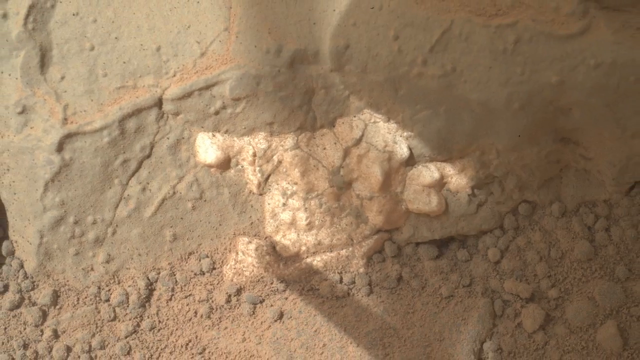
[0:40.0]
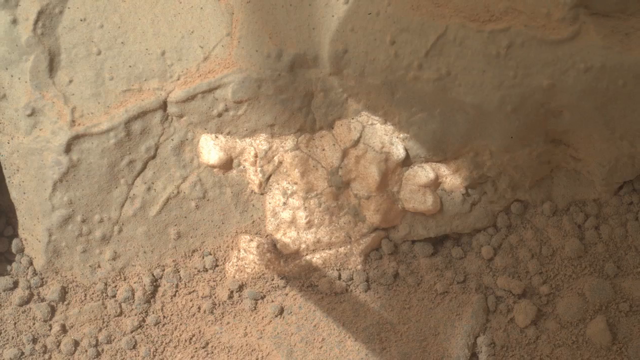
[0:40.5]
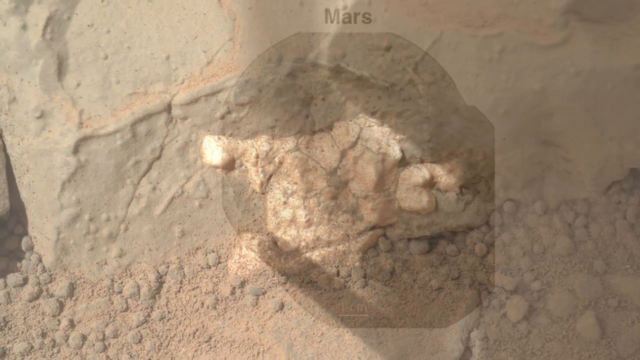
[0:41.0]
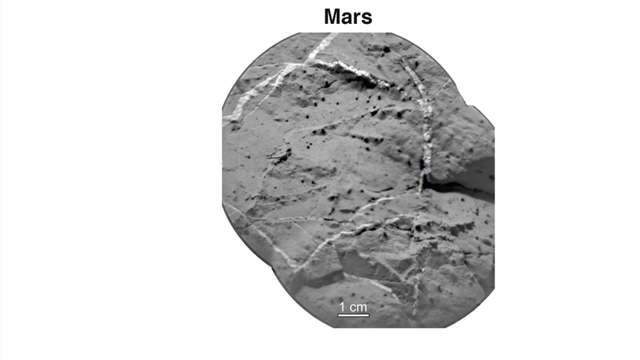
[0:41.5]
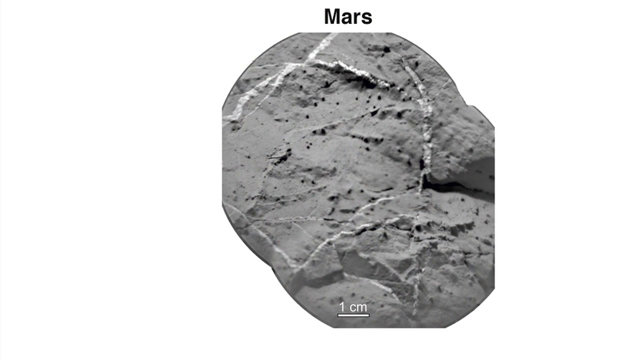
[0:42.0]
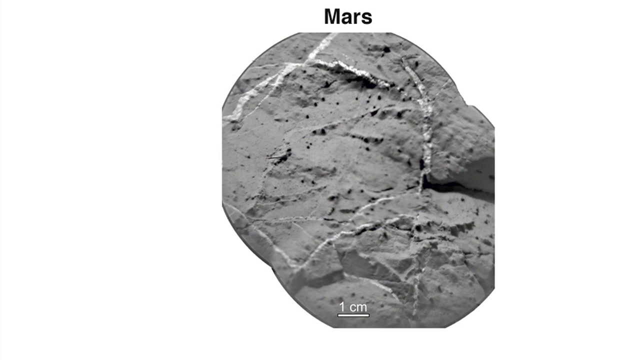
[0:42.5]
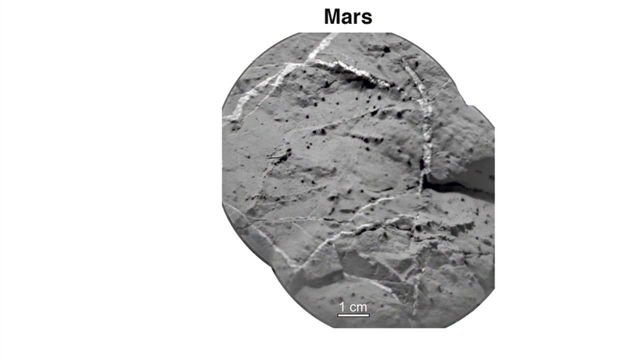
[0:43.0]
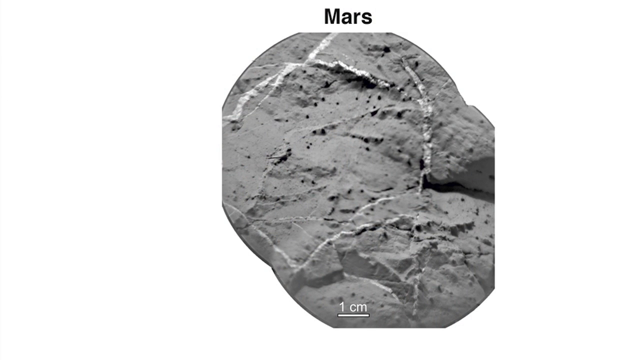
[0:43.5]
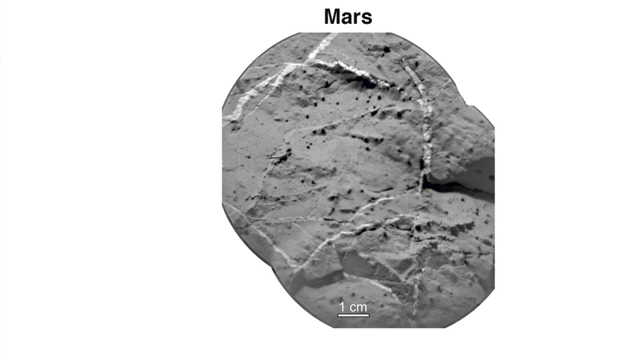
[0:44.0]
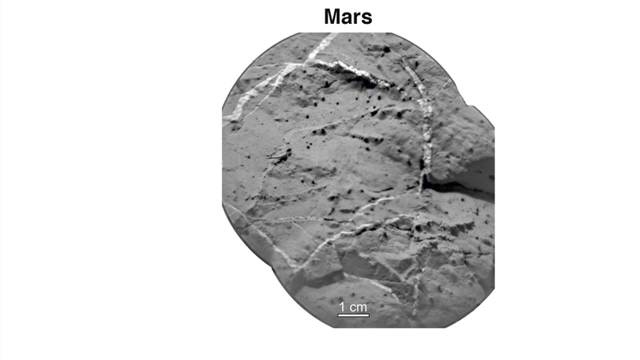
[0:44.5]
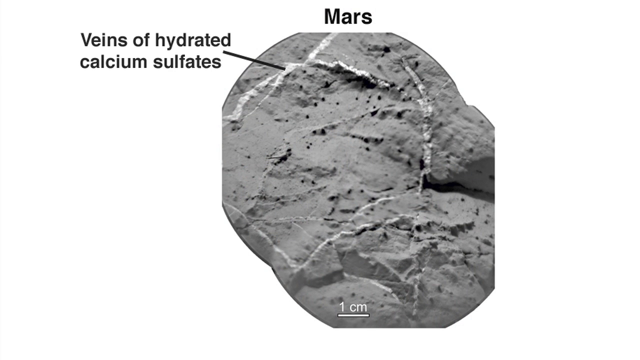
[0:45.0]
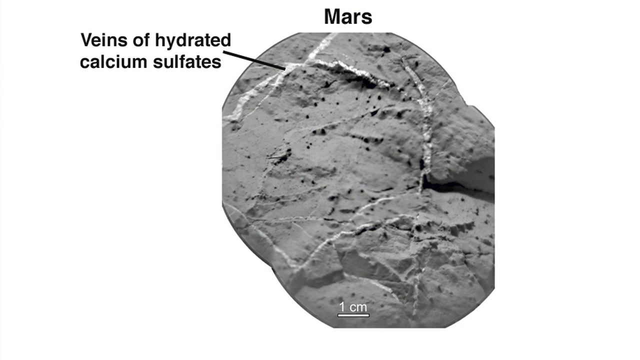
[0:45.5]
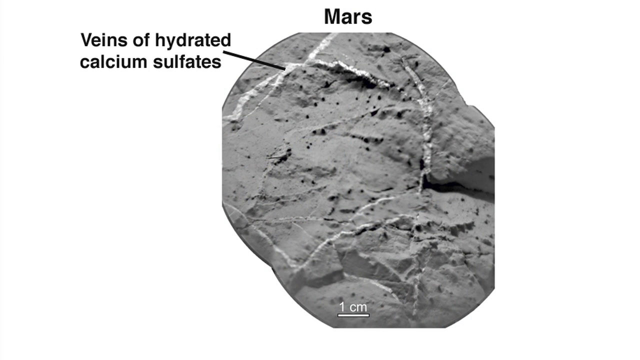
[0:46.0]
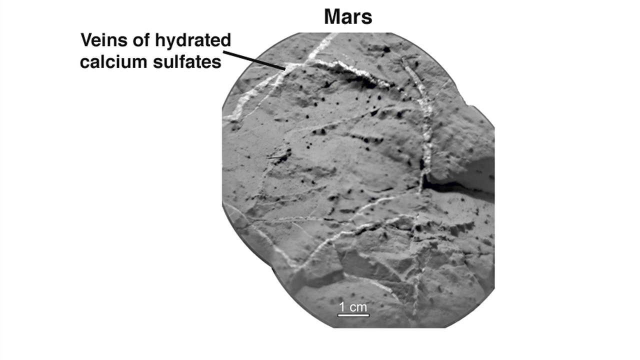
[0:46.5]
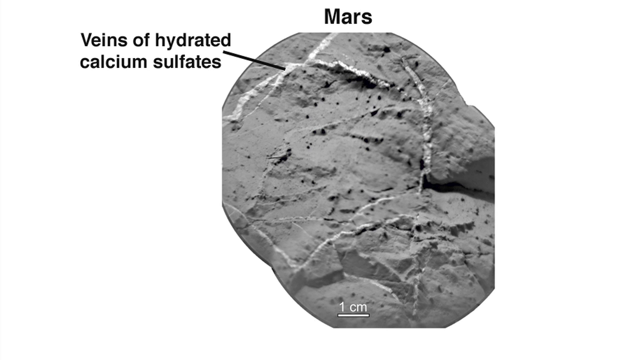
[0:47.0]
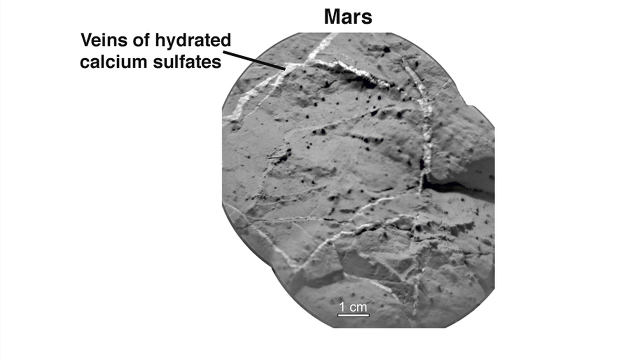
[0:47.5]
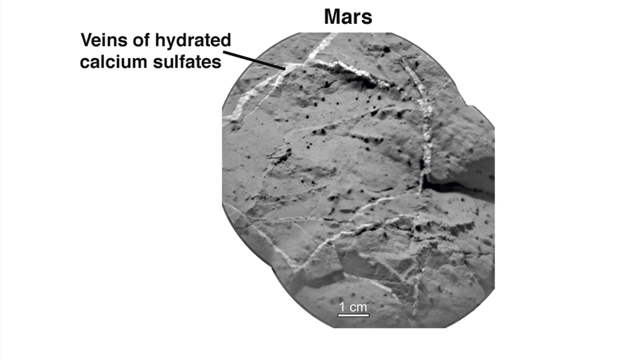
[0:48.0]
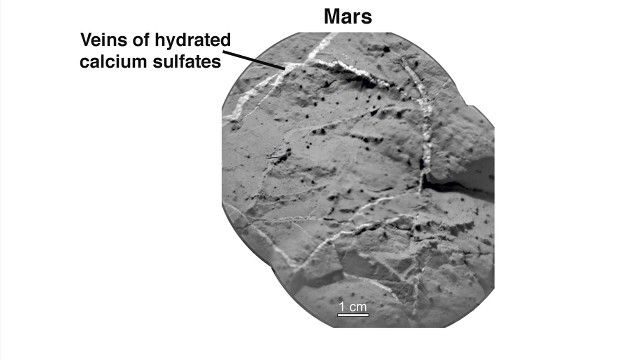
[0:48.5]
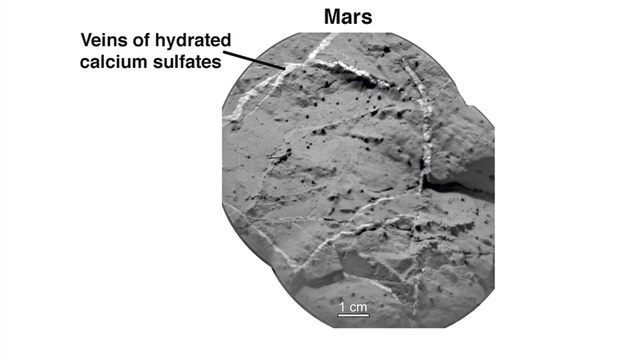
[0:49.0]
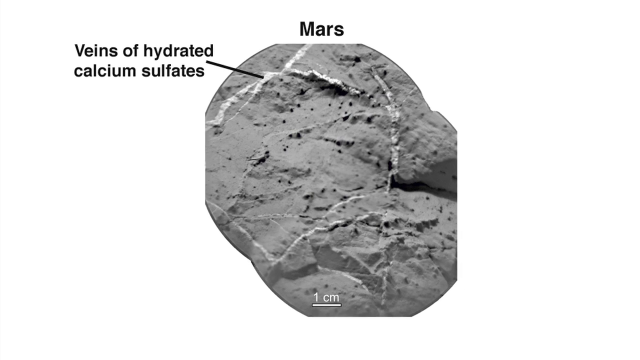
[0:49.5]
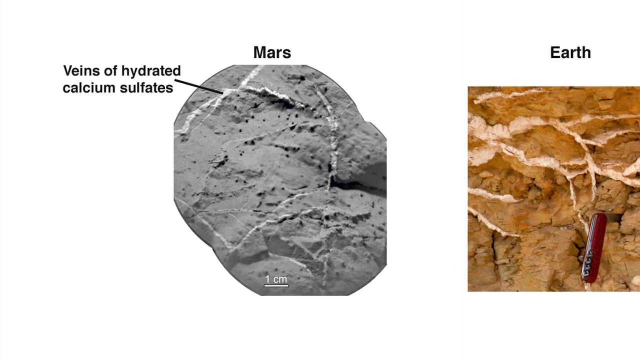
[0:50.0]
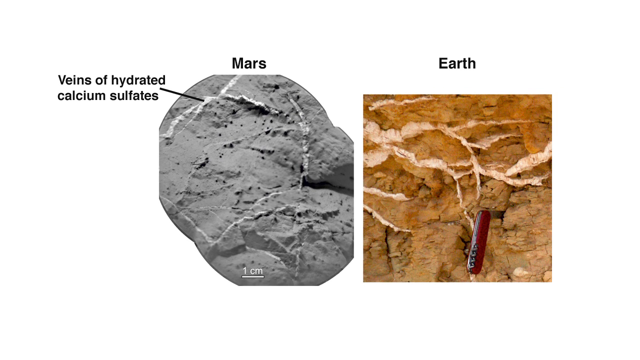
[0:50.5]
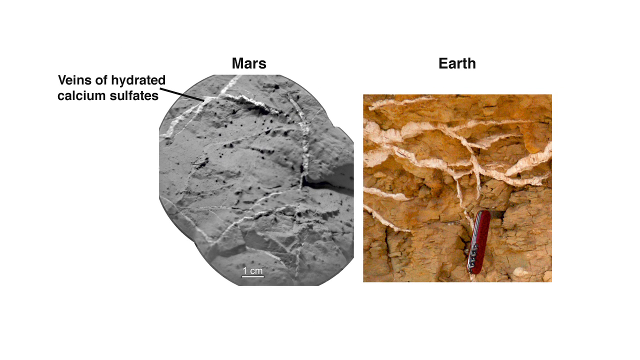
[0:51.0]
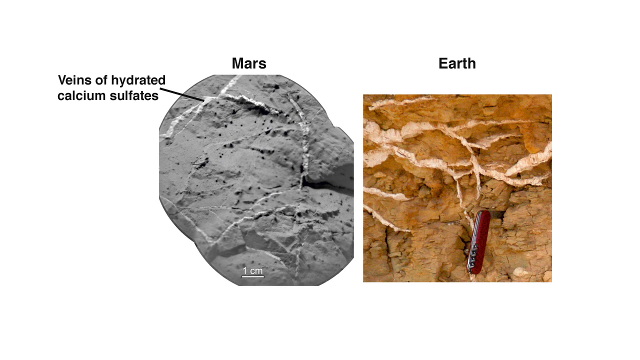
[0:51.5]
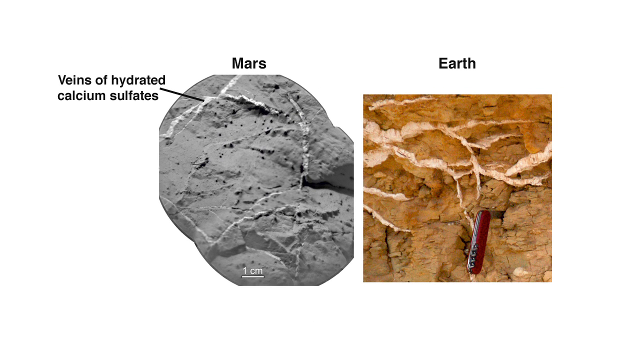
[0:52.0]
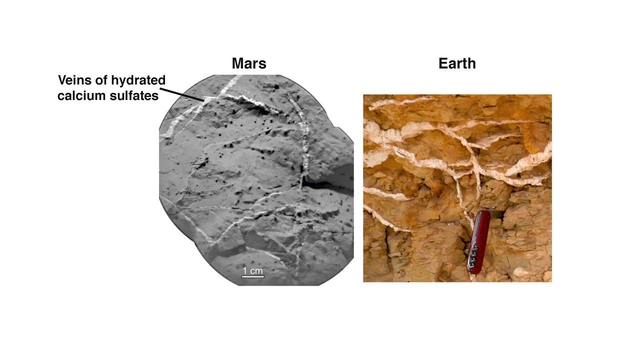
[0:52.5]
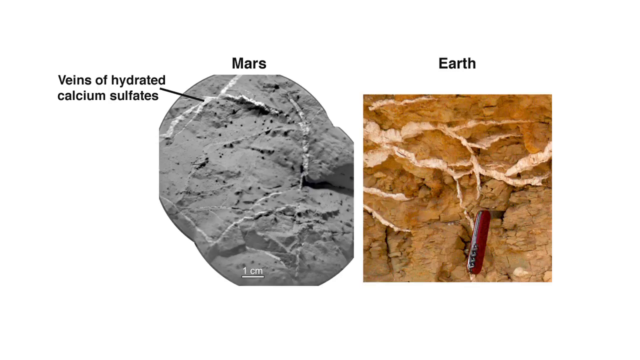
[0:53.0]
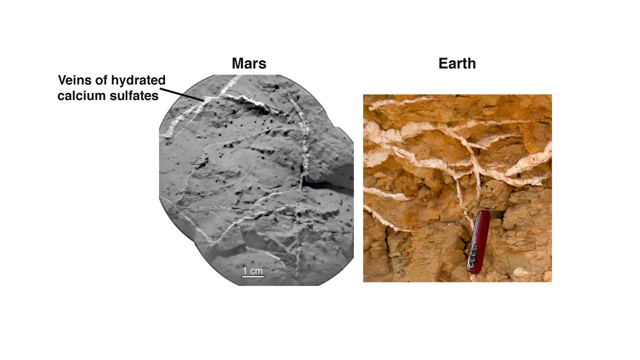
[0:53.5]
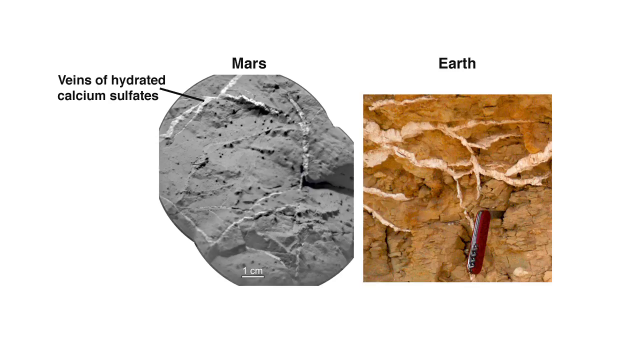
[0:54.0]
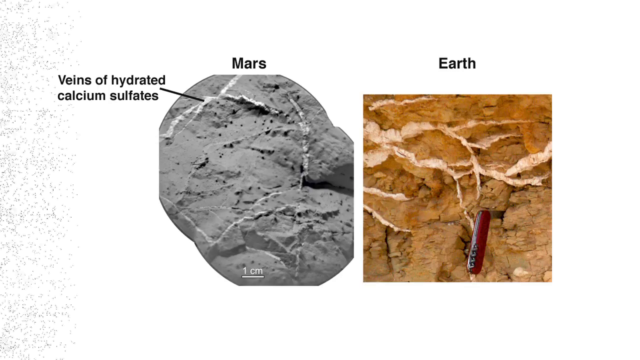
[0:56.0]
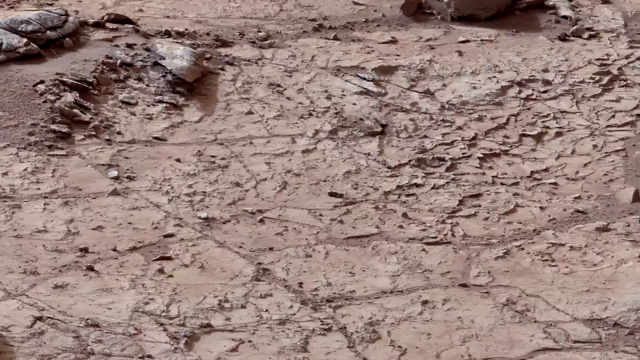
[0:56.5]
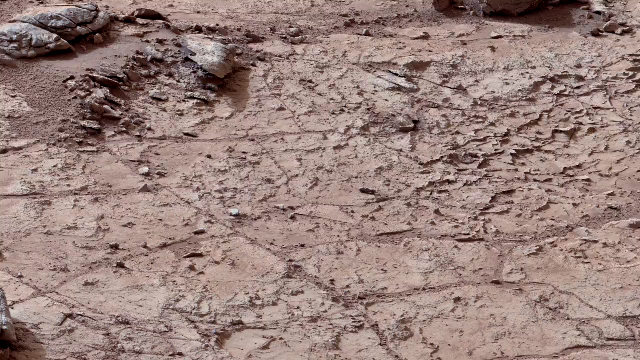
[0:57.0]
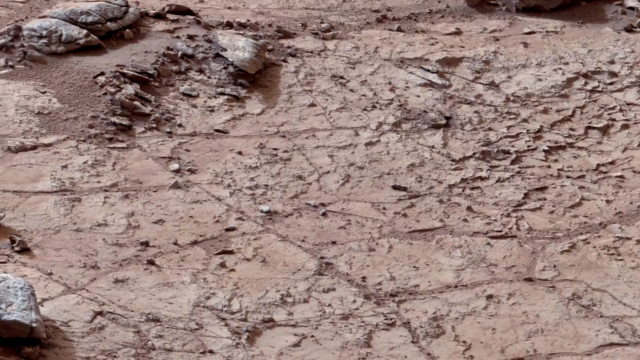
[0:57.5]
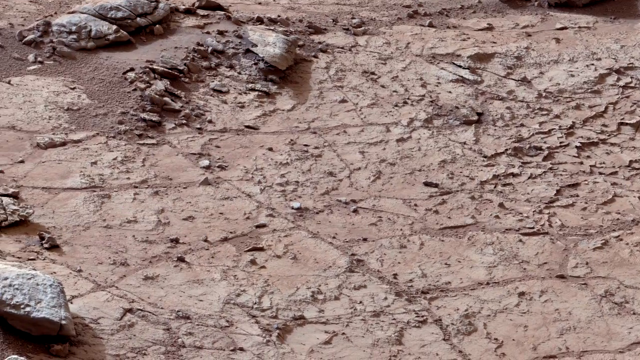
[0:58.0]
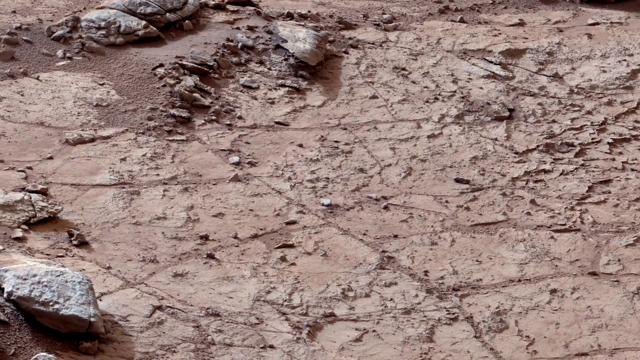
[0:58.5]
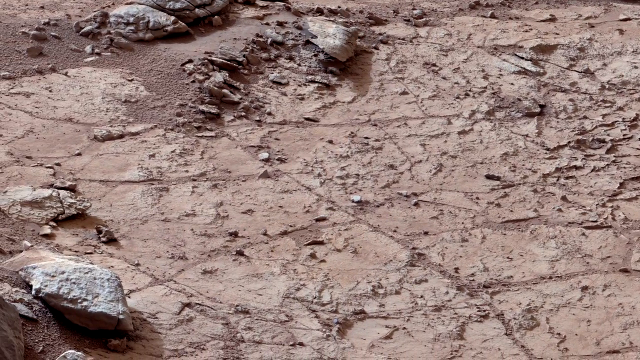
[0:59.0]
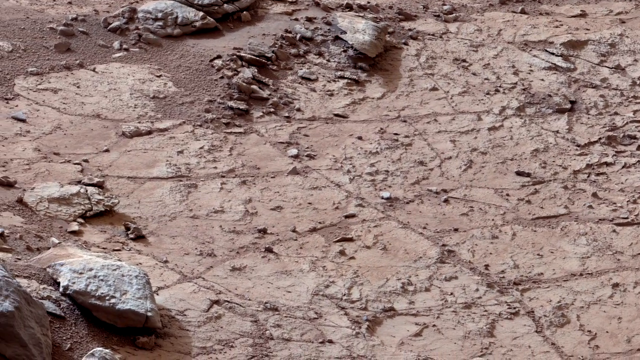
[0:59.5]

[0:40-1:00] This portion of the video explores the surface of Mars and what might be contained in it, comparing it to Earth. One section shows that veins of hydrated calcium sulfates are found on the surface of Mars, displaying a picture alongside a comparison photo of the surface of Earth that also contains veins of hydrated calcium sulfates. The Mars photo is black and white, while the Earth photo is white and tan. Real-time camera images of the Martian surface also appear, apparently showing the veins of hydrated calcium sulfates. The video cycles through these photos and images.